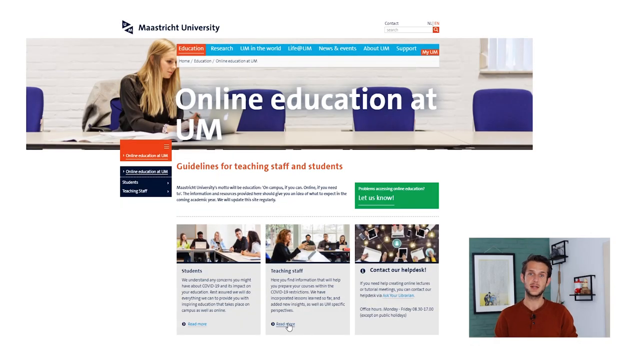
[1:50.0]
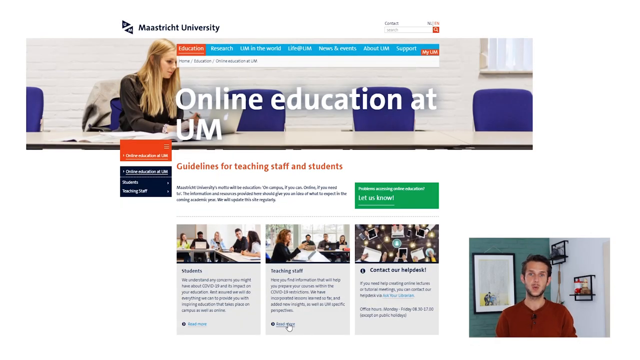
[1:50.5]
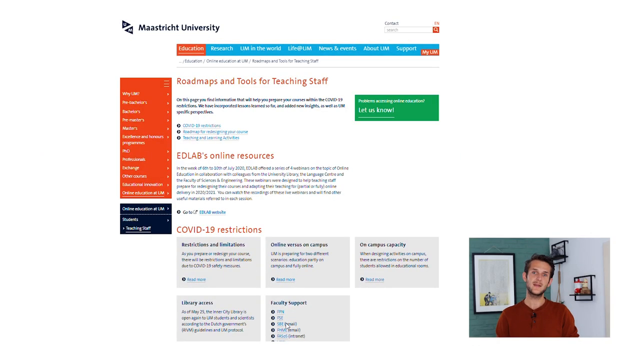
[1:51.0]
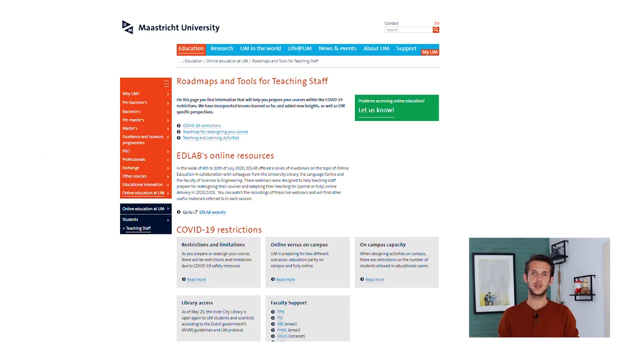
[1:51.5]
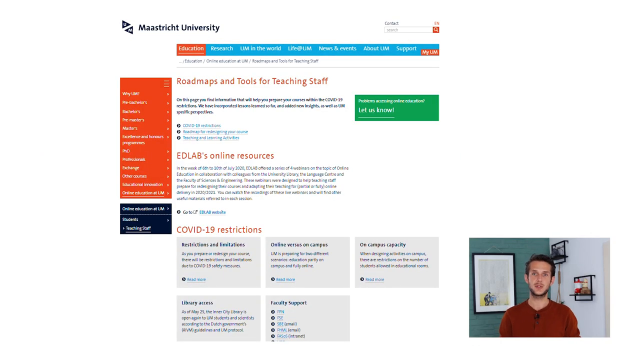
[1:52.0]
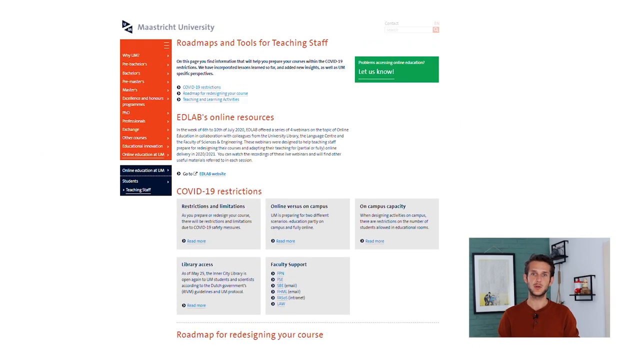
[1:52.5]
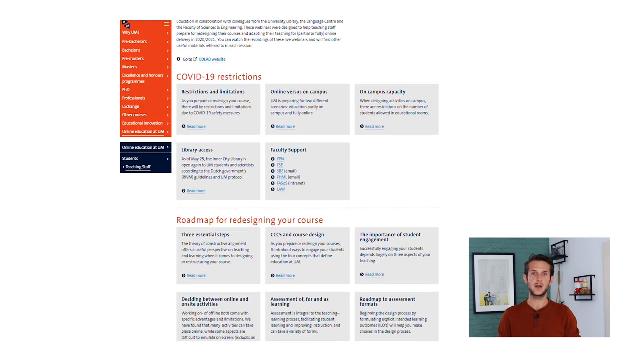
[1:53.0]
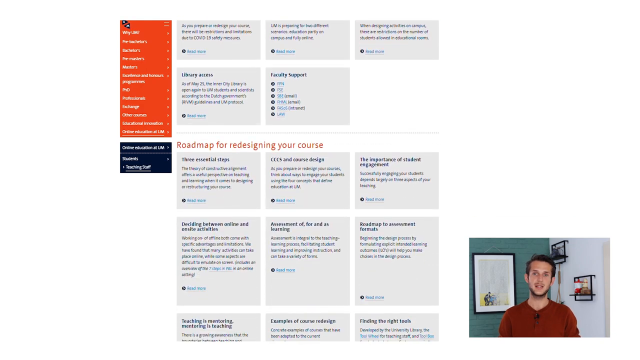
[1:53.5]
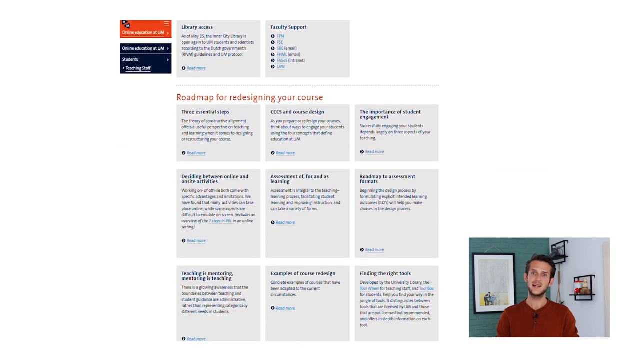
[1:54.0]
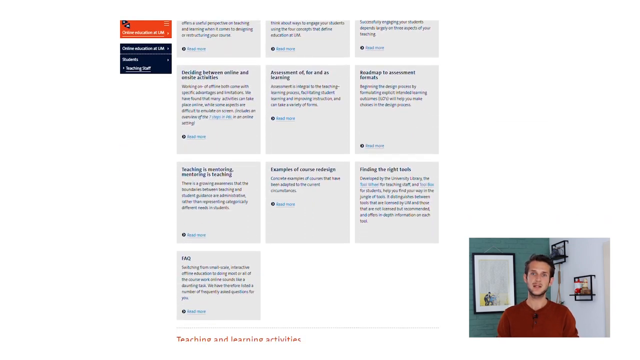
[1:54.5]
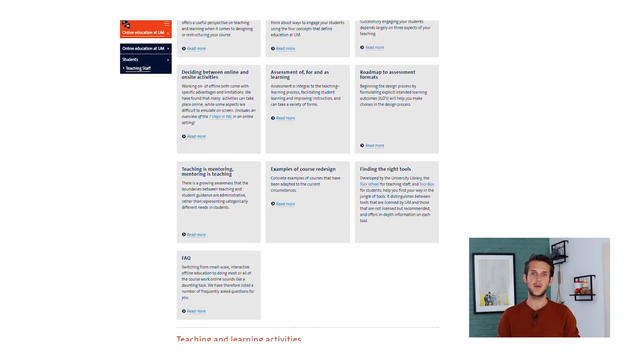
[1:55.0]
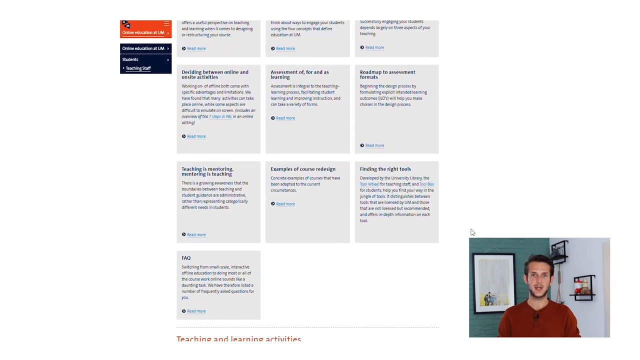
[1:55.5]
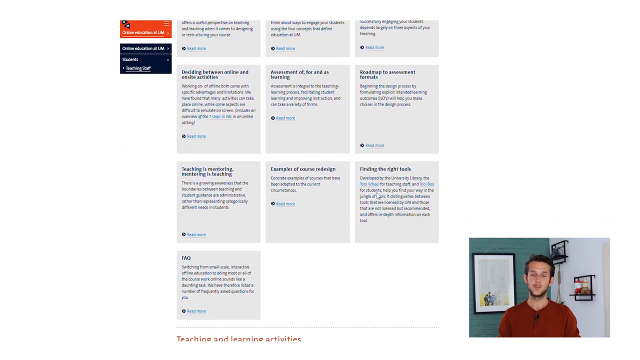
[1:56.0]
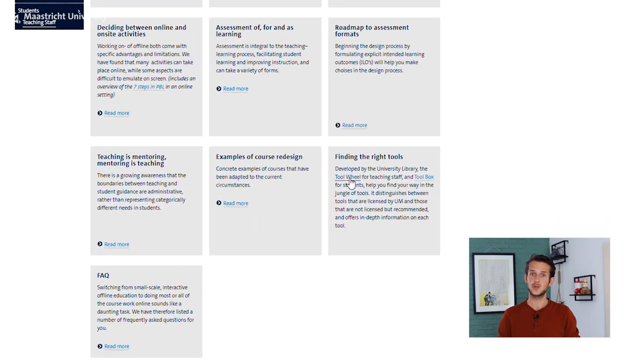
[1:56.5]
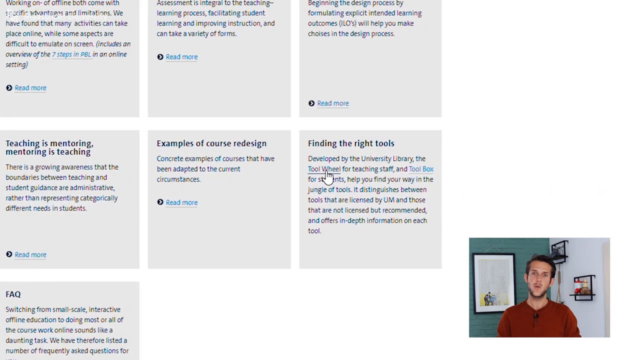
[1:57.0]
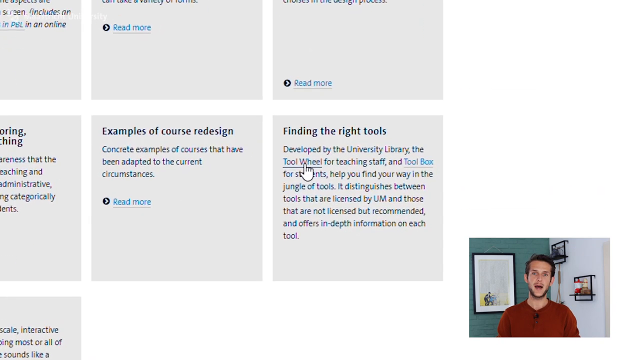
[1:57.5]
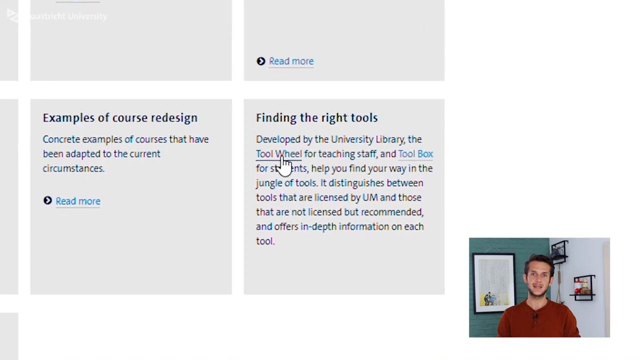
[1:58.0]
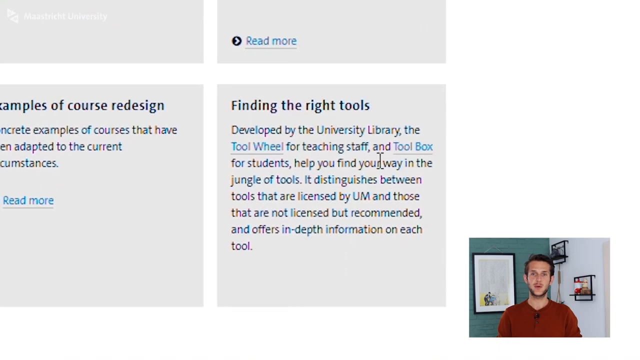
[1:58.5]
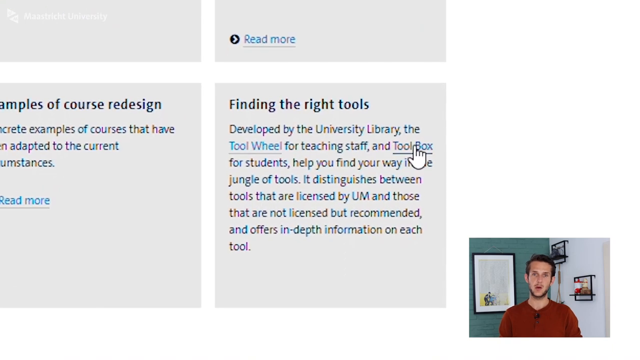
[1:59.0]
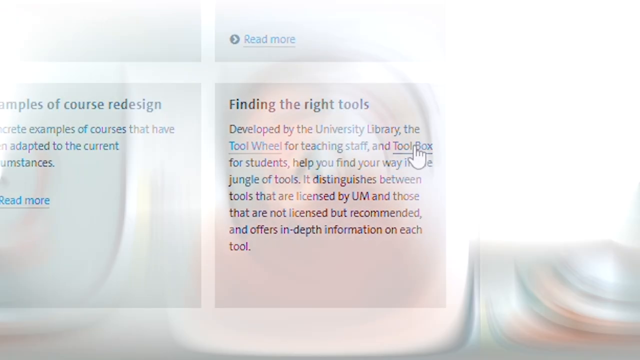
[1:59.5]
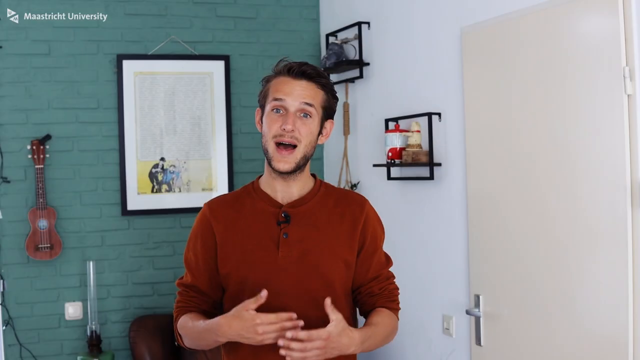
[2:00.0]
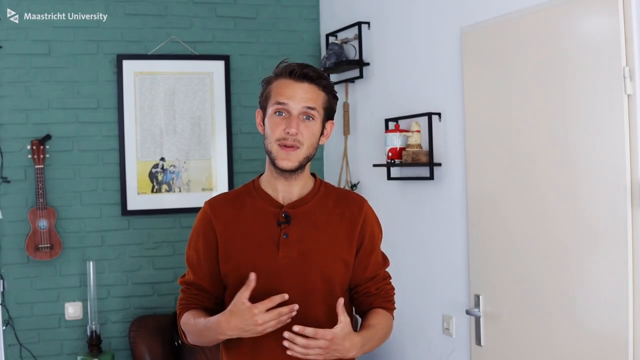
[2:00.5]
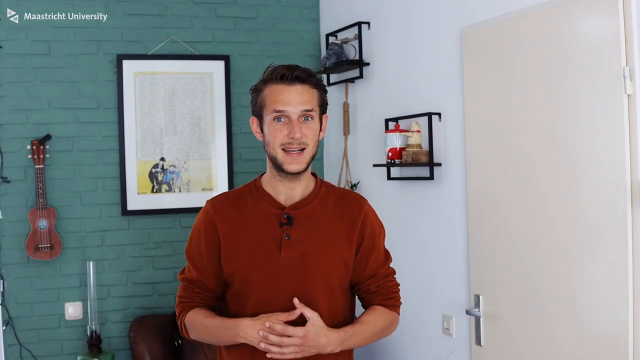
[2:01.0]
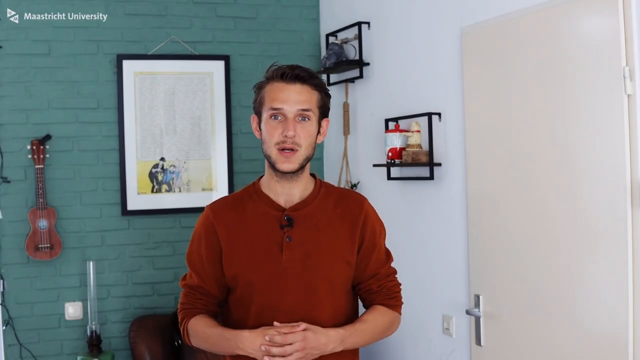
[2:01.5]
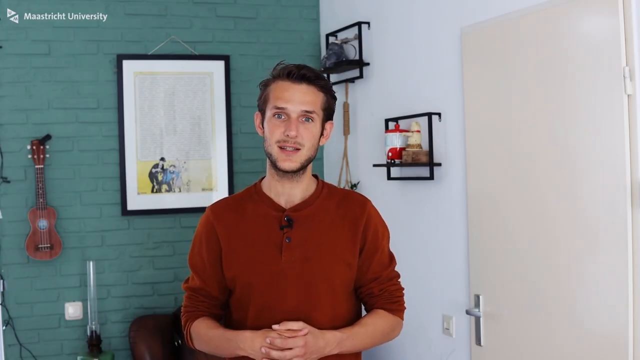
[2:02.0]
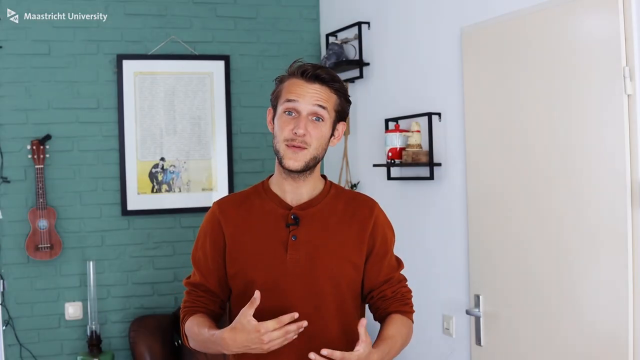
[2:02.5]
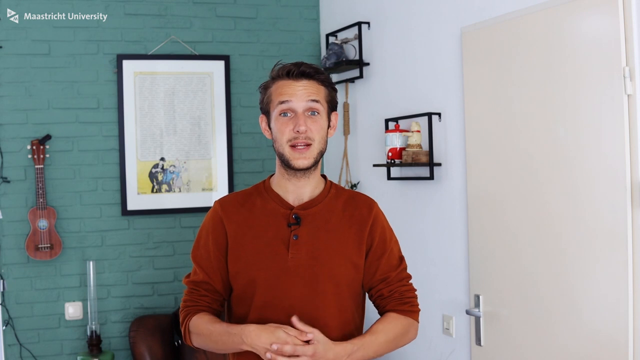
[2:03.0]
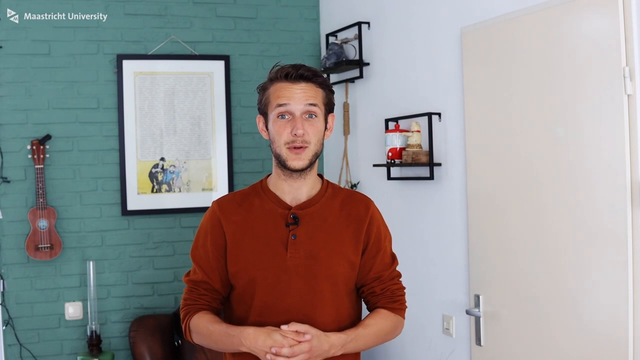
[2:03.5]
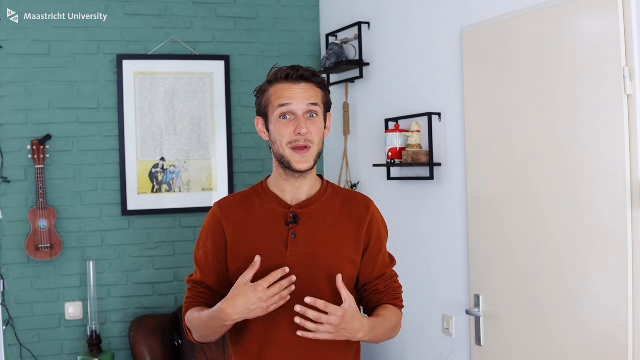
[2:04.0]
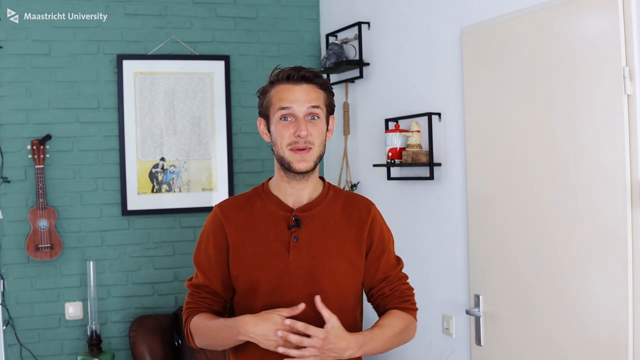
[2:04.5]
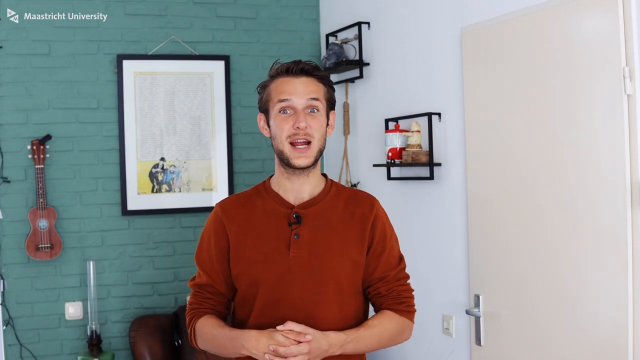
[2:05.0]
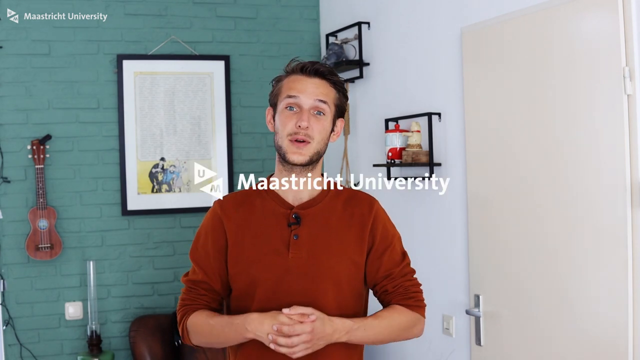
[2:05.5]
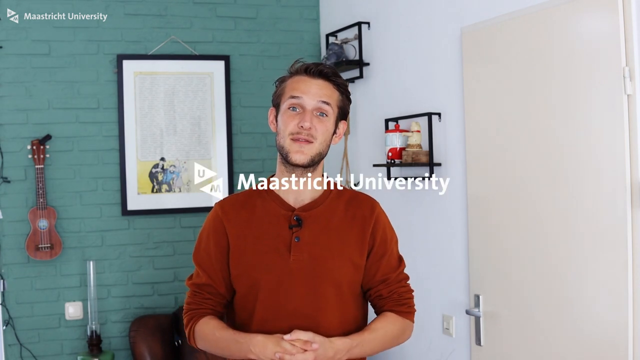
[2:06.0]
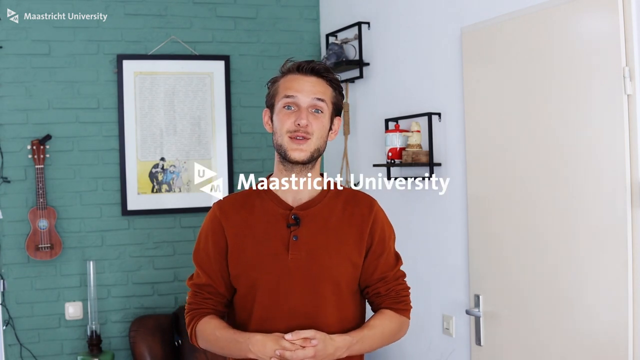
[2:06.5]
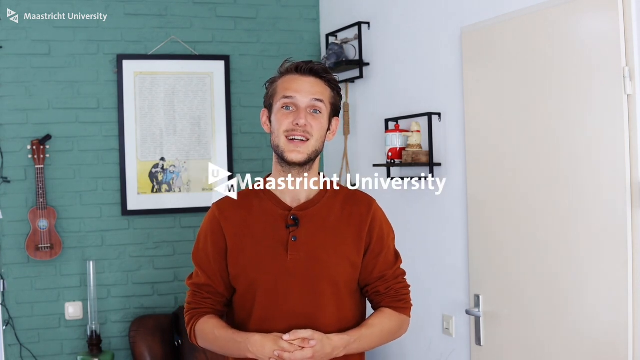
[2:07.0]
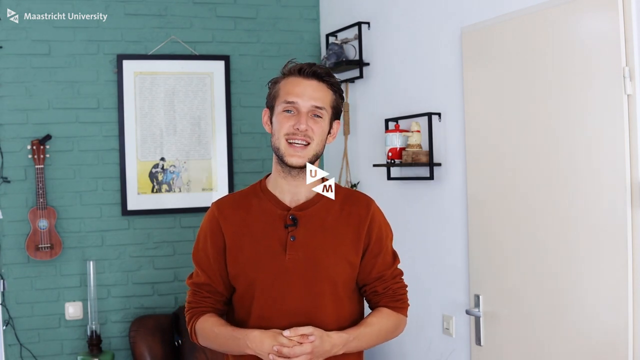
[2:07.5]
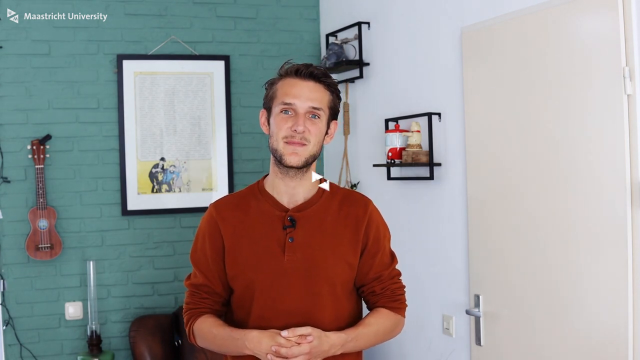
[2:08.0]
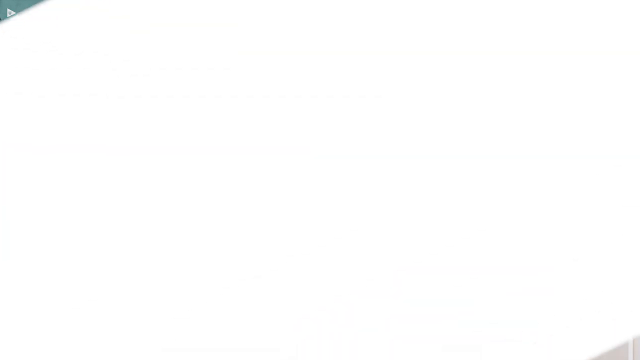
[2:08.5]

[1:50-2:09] The cursor moves through the Maastricht website, on an education page as indicated by the top navigation bar. The header reads "online education at UM", with guidelines for teaching staff and students. The page is scrolled down to three panels at the bottom reading "students", "staff" and "contact our help desk". The read more button on the teaching staff panel is clicked, and a new page appears titled "roadmaps and tools for teaching staff". Scrolling down shows COVID-19 restrictions and a roadmap for redesigning your course, and within this a panel reading "finding the right tools", which contains a clickable link to the tool wheel for teaching staff as well as the toolbox for students. The next shot shows the man speaking to the camera again, with no more screen recording; he is enthusiastic and seems to be concluding the video. The Maastricht University logo then pops up over him and transitions away to a wide frame.